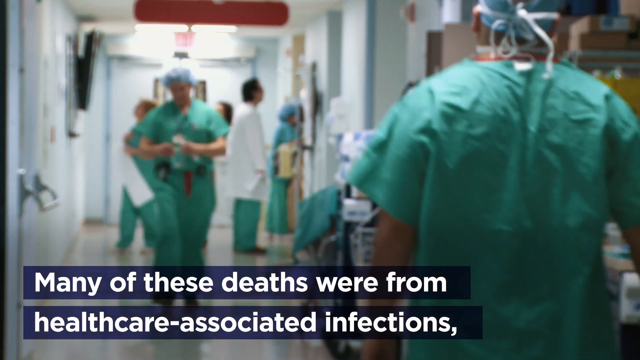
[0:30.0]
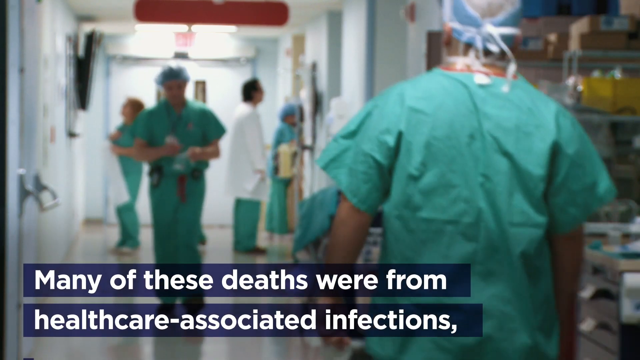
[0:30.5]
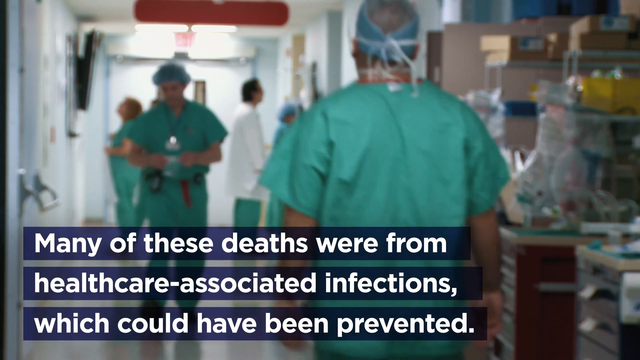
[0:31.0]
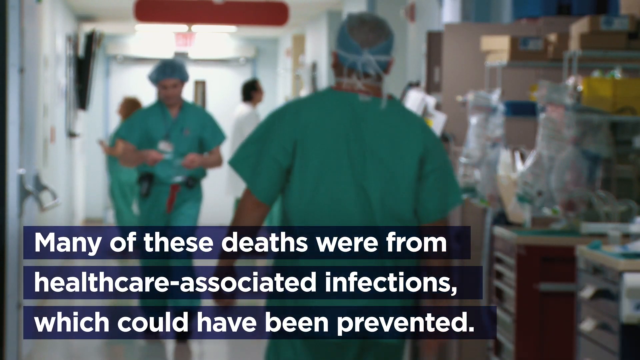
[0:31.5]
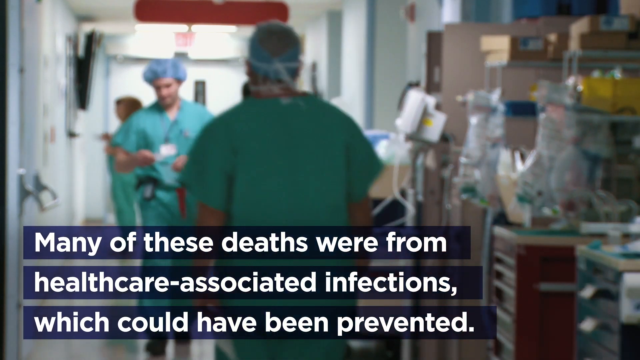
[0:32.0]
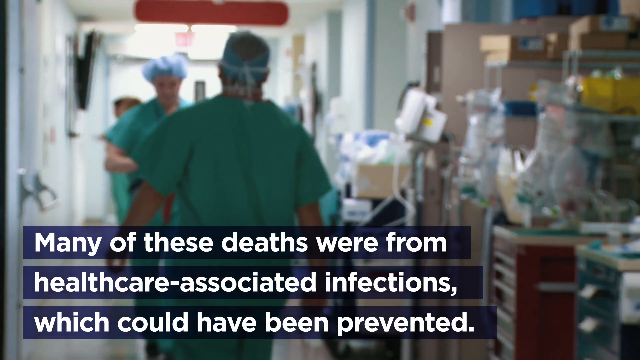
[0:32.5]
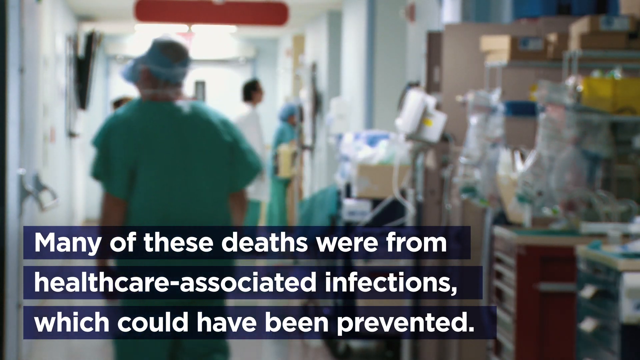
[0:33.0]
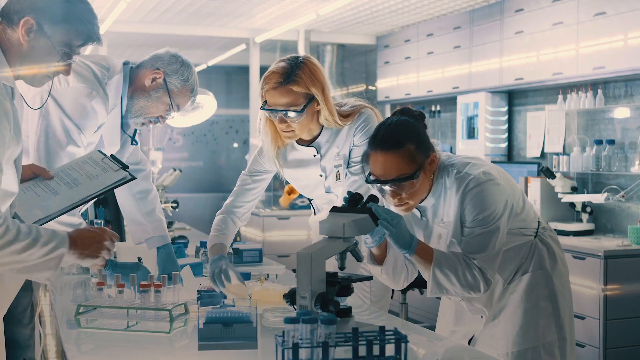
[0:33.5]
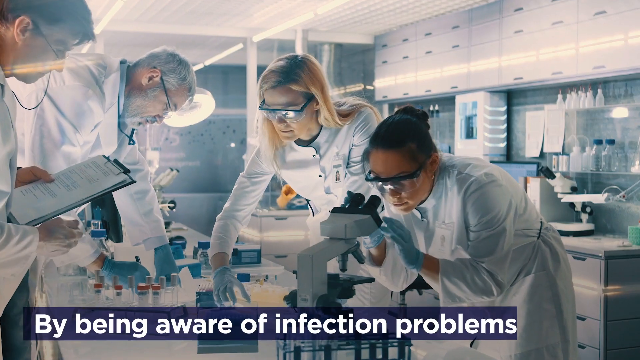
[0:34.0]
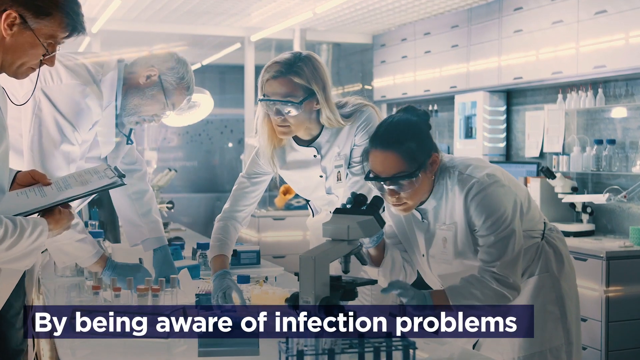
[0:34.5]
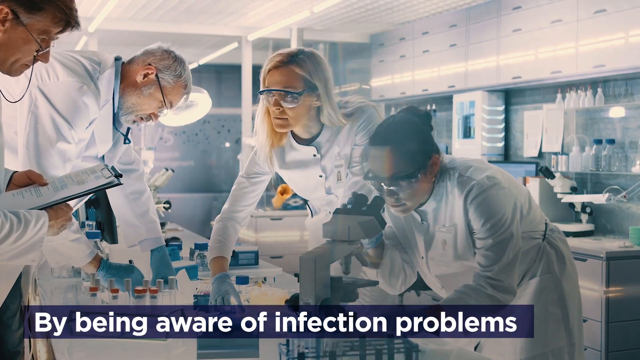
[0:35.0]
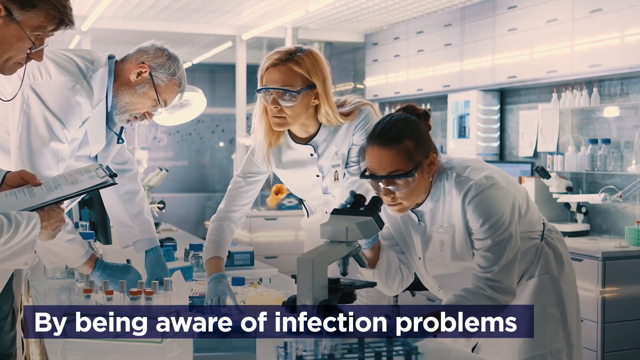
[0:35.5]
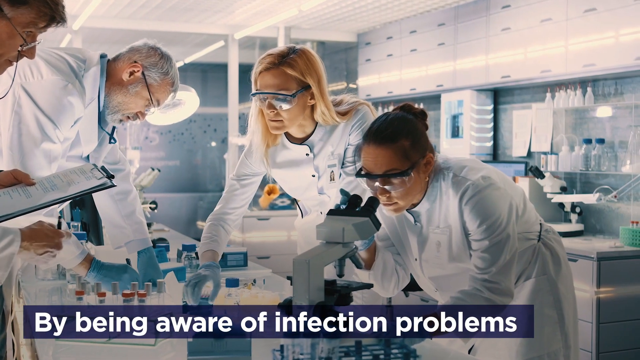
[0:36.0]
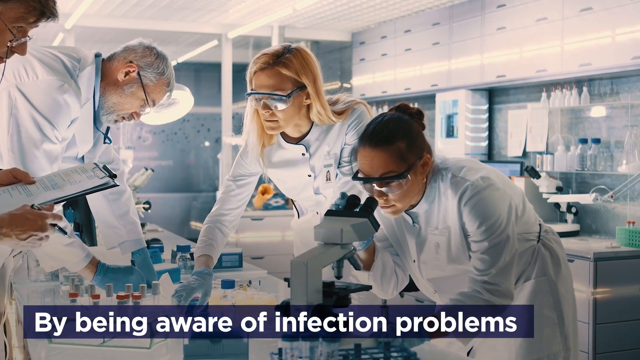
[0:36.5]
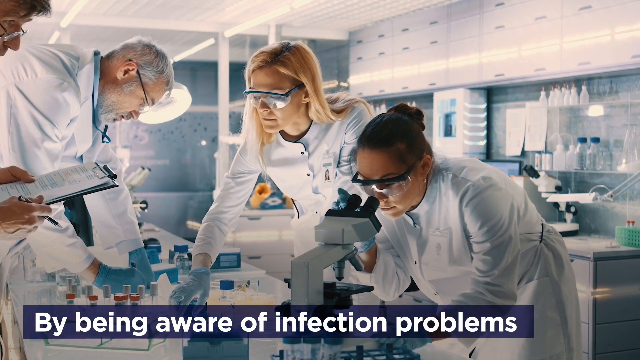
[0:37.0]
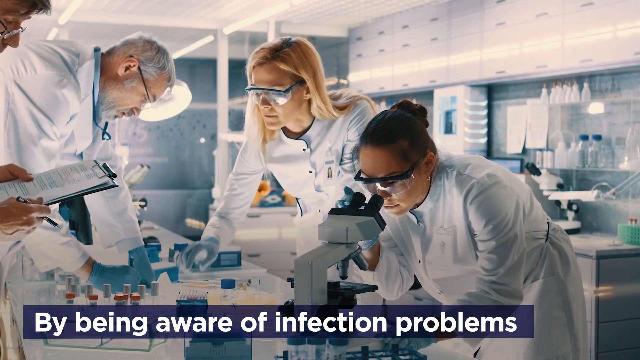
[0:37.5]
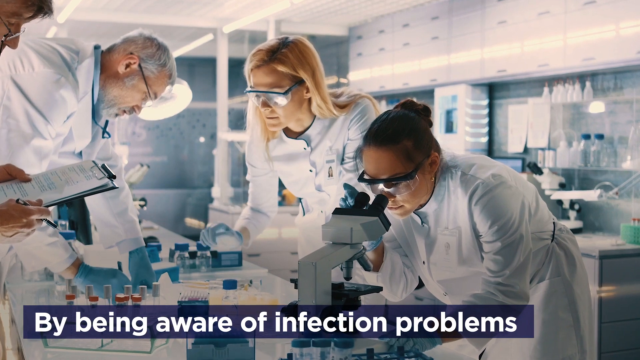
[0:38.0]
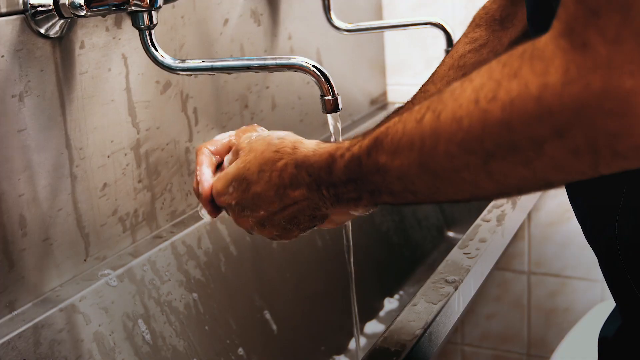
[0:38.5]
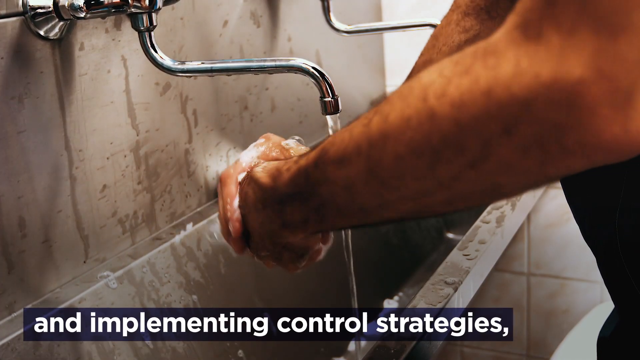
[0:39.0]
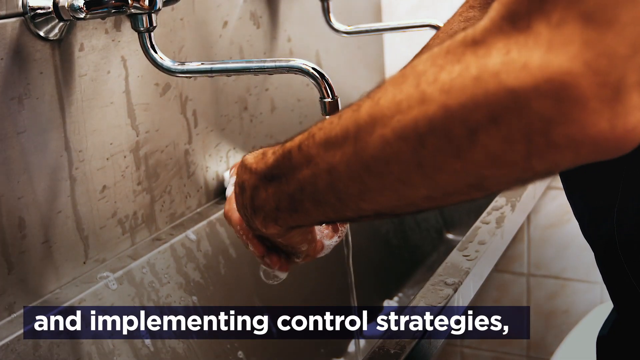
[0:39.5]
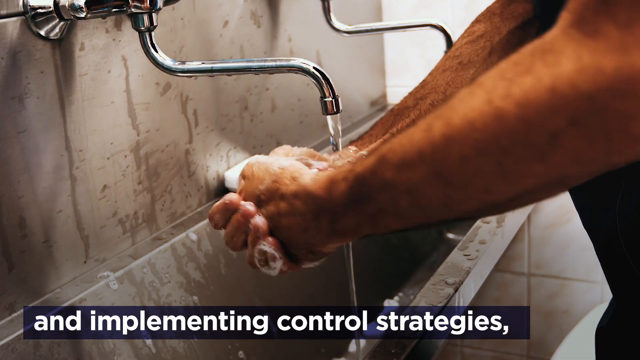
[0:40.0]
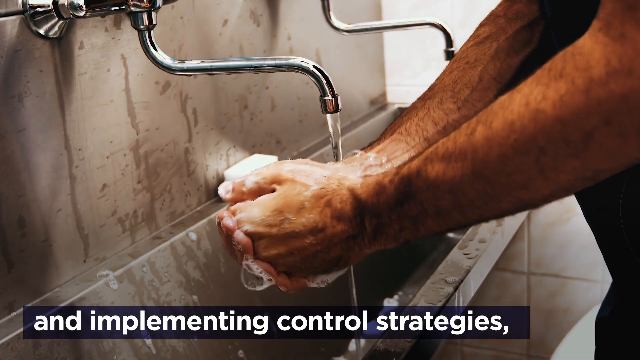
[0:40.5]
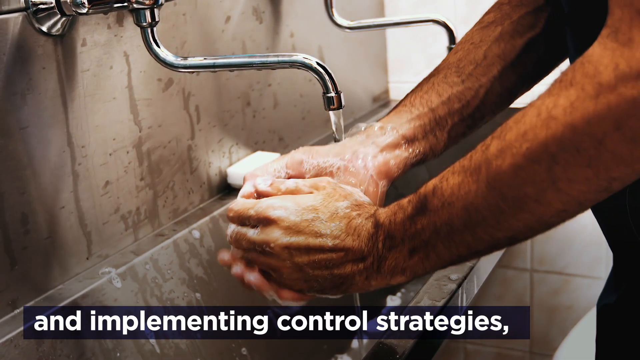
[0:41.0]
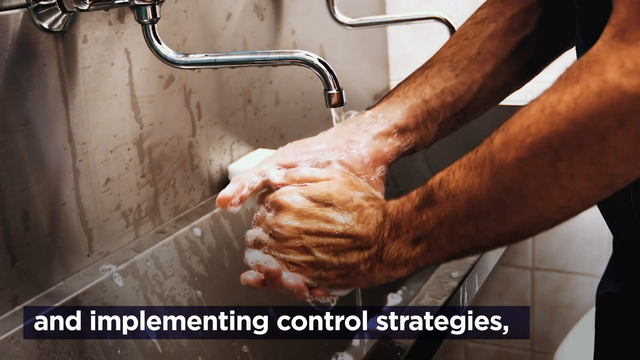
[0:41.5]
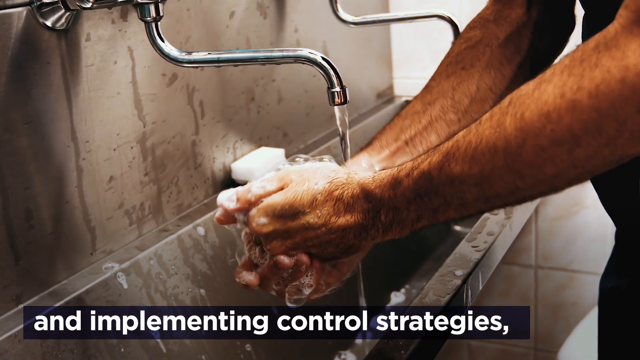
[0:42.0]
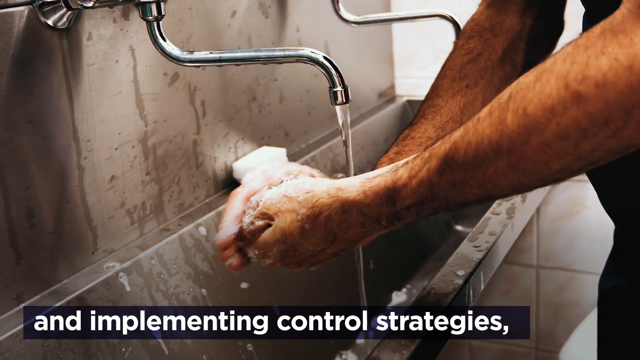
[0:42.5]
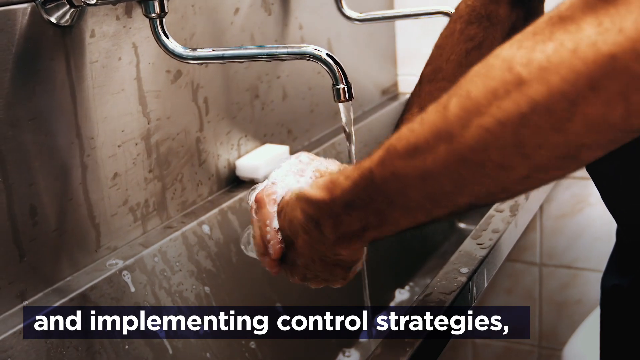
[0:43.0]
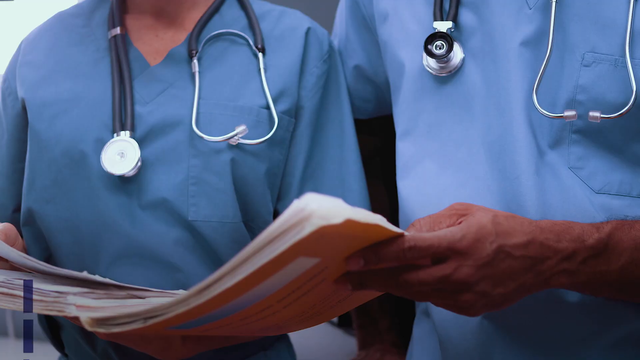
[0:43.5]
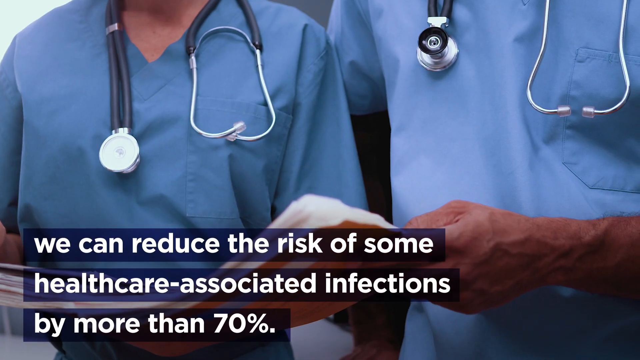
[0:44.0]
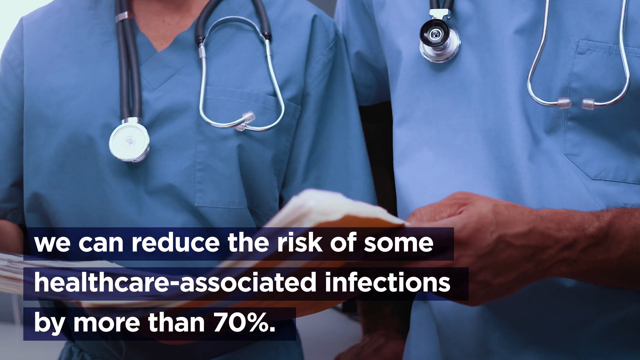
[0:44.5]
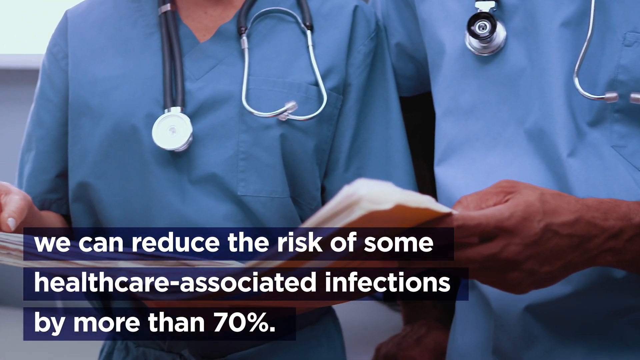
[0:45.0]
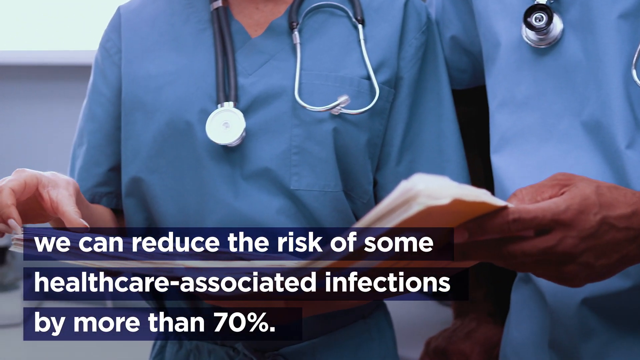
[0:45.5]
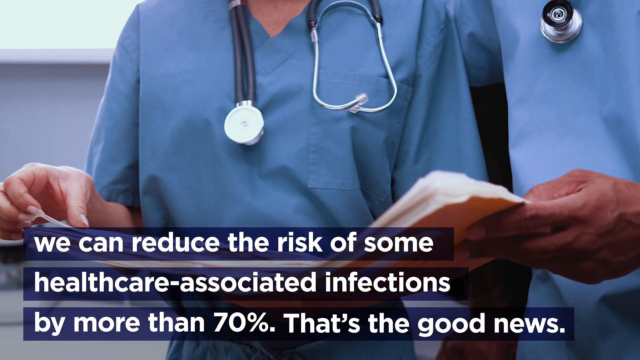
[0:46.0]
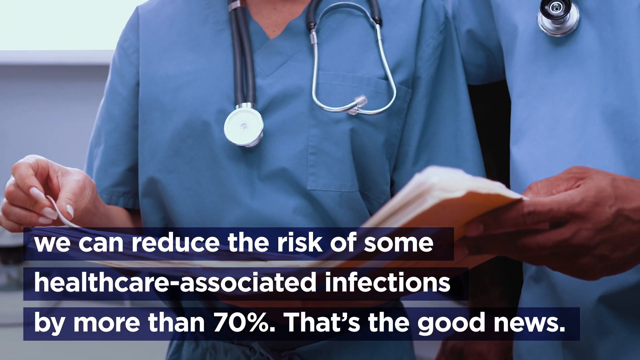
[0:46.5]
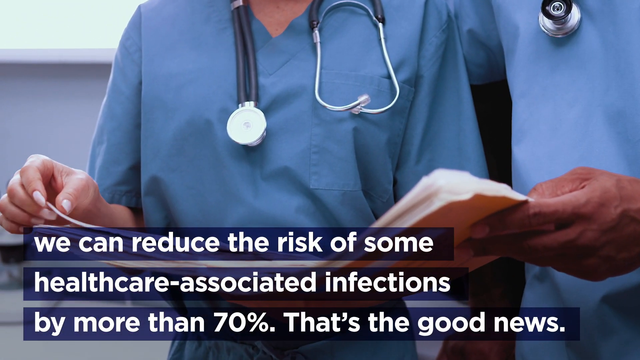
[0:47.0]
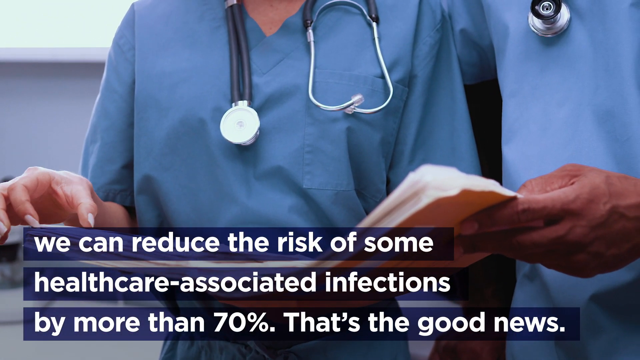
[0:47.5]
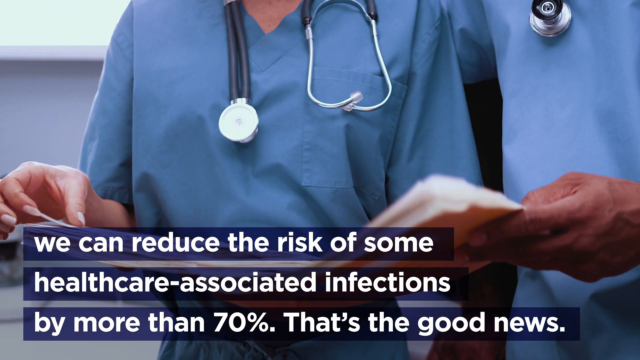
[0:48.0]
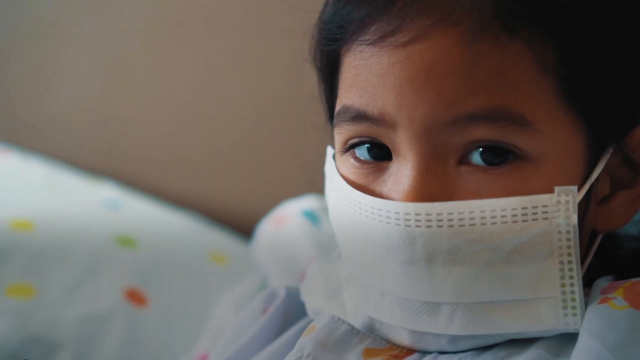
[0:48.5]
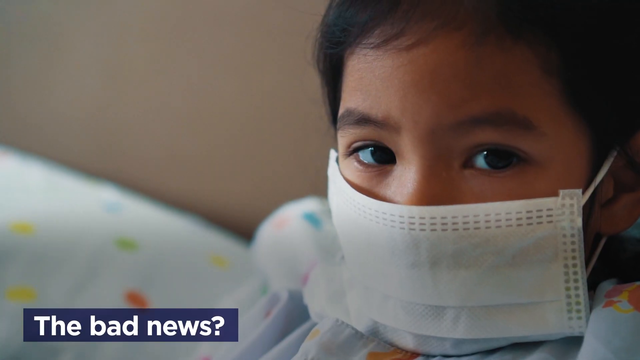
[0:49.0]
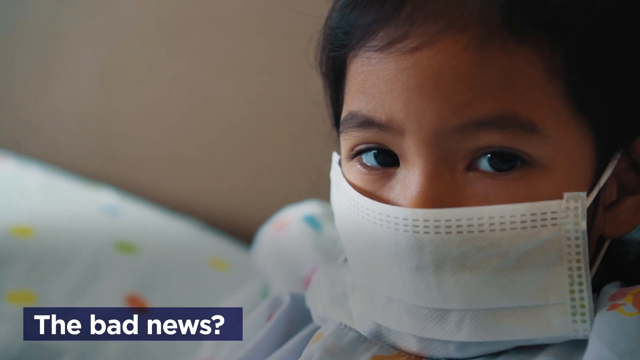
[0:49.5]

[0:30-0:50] Several doctors in surgical outfits walk into a hospital room, with various pieces of equipment visible on the right side of the screen. Text at the bottom reads "many of these deaths were from health care associated infections which could have been prevented." The scene shifts to people in lab coats looking into microscopes and studying the slides beneath them, with their equipment and cabinets visible on the right. Next, apparently a doctor or surgeon washes his hands at a silver sink, scrubbing them diligently. Several people in blue scrubs with stethoscopes around their necks, apparently a woman and a man, look at a book and read it. Finally, a little boy lies in a bed with a mask on his face, like the masks used during COVID.